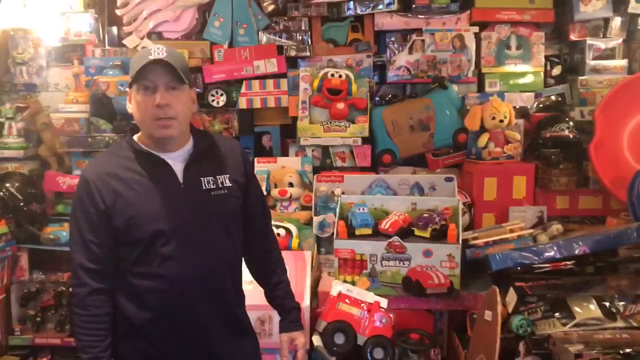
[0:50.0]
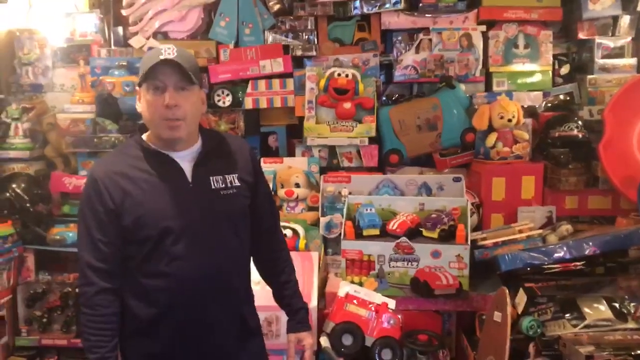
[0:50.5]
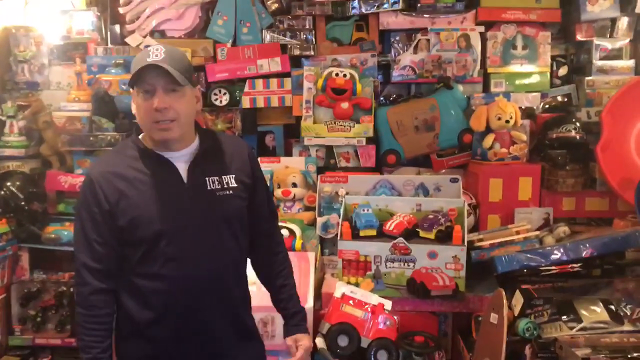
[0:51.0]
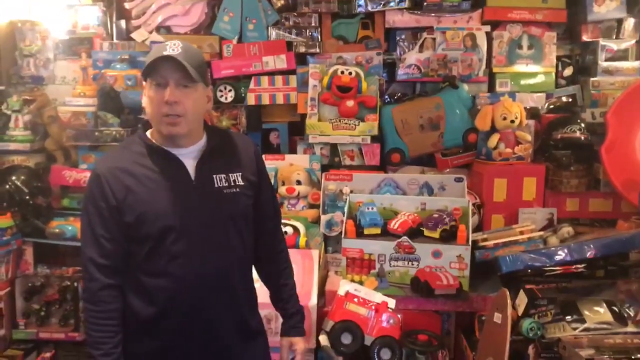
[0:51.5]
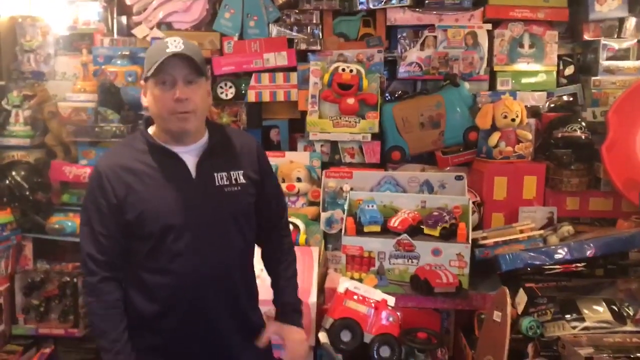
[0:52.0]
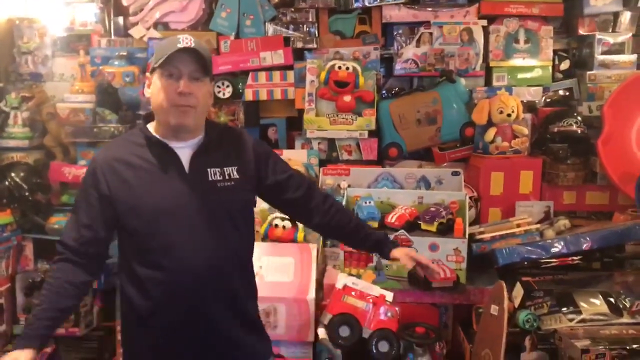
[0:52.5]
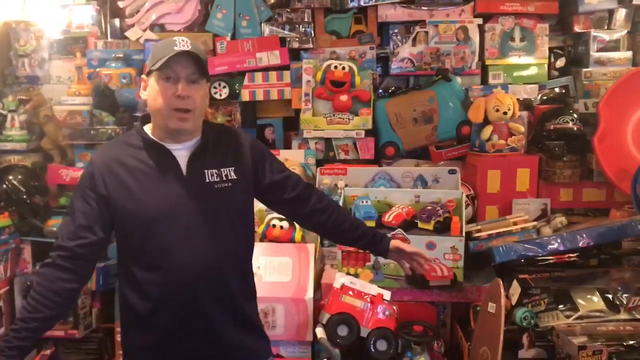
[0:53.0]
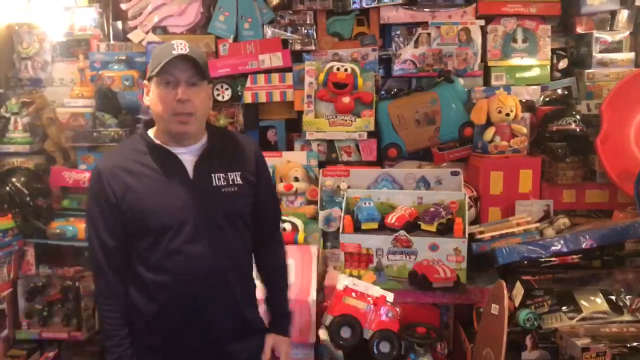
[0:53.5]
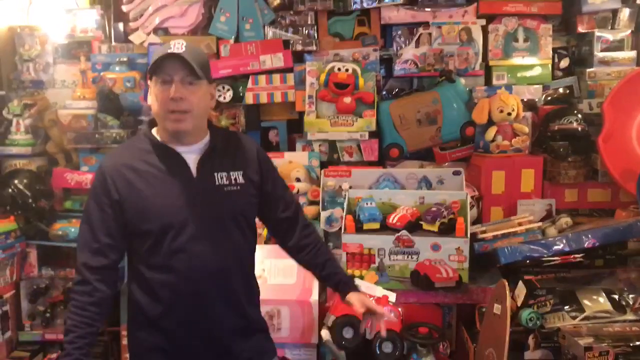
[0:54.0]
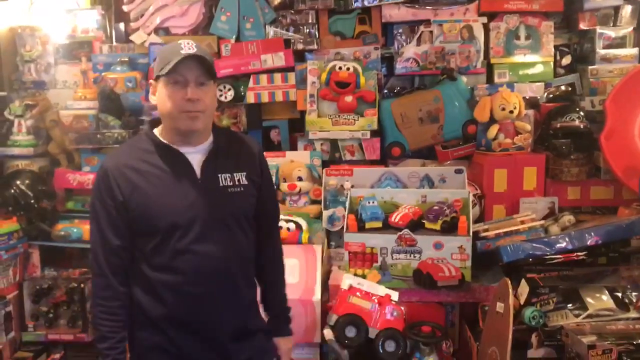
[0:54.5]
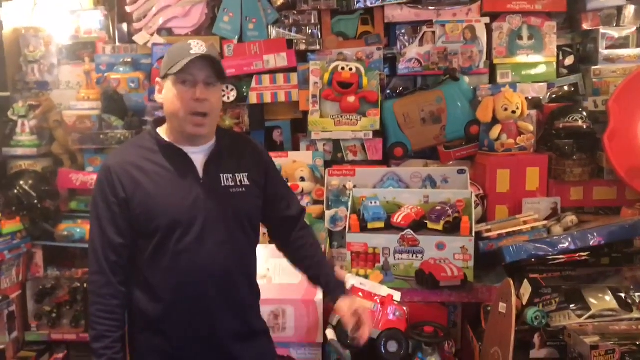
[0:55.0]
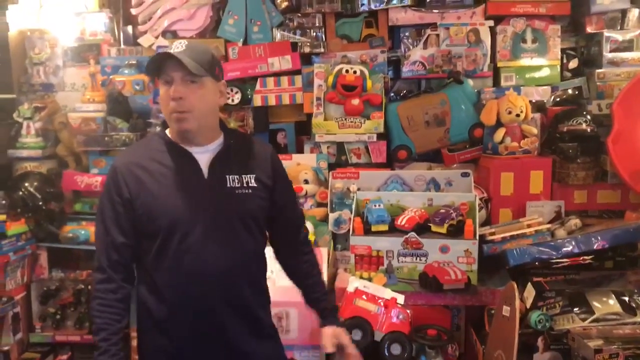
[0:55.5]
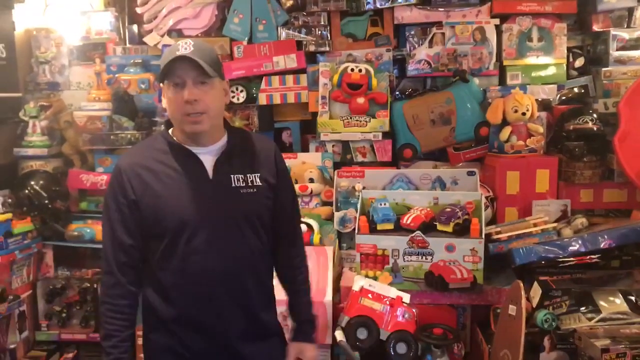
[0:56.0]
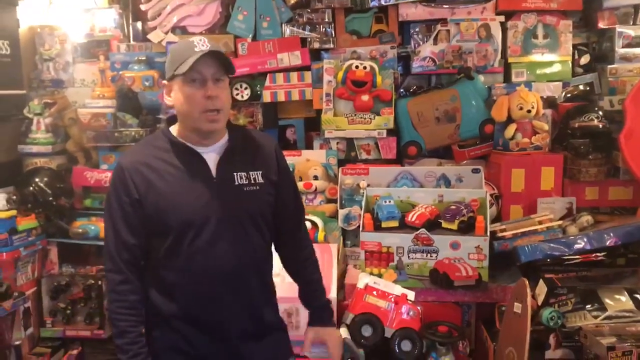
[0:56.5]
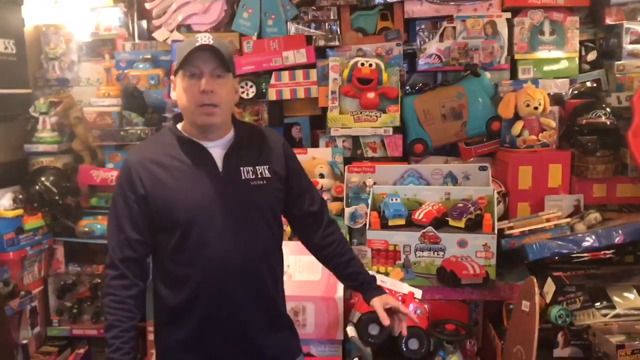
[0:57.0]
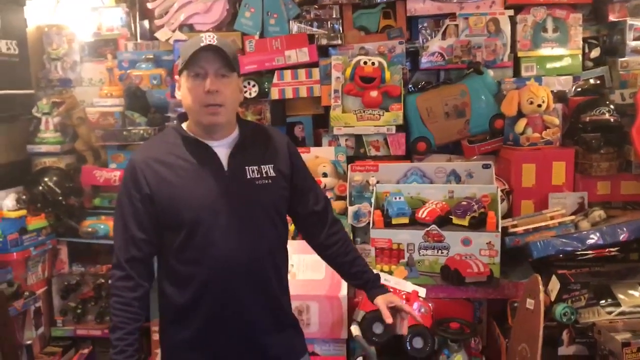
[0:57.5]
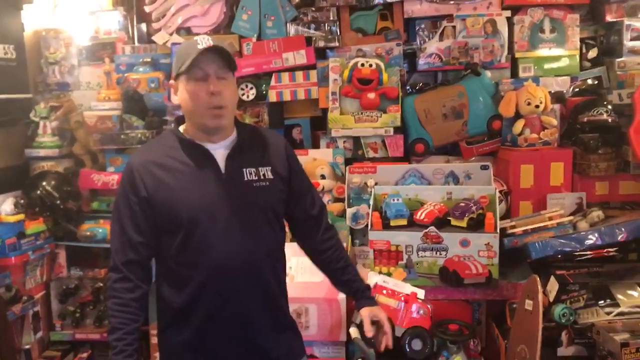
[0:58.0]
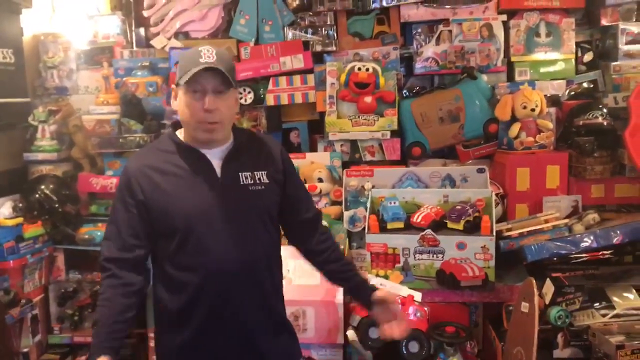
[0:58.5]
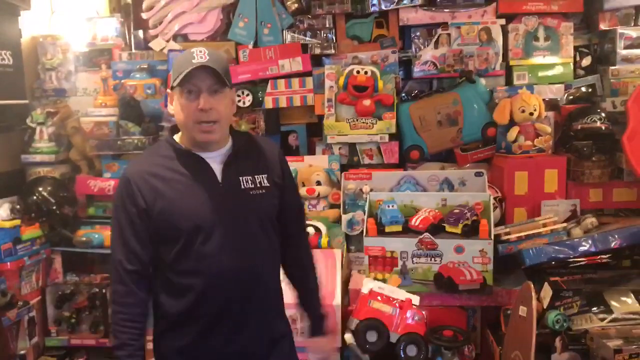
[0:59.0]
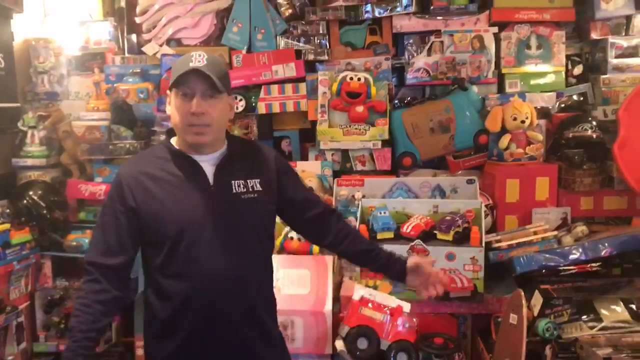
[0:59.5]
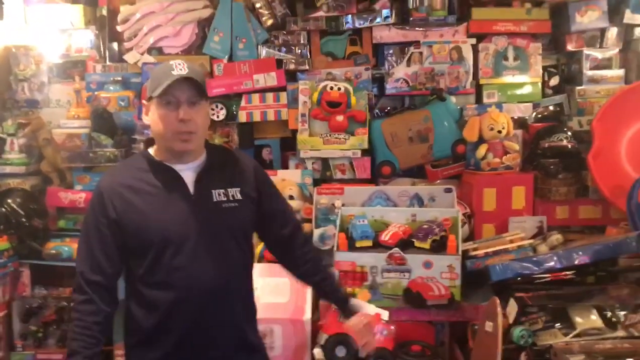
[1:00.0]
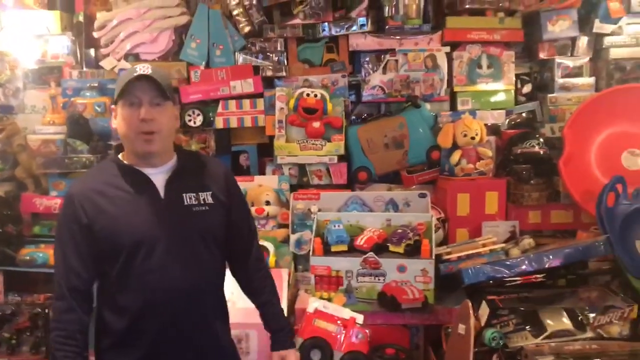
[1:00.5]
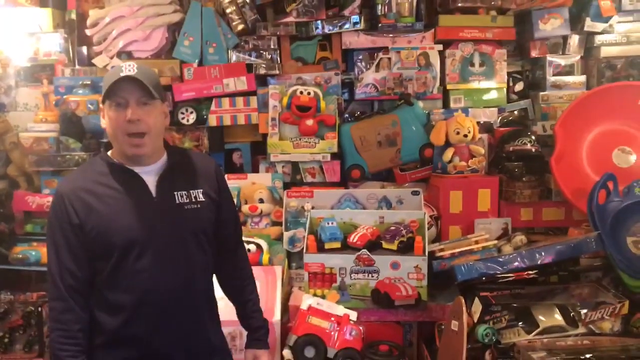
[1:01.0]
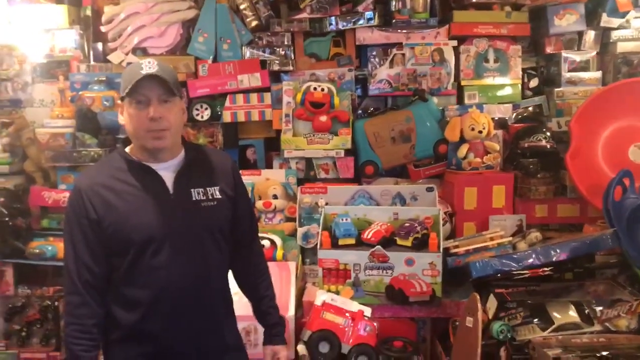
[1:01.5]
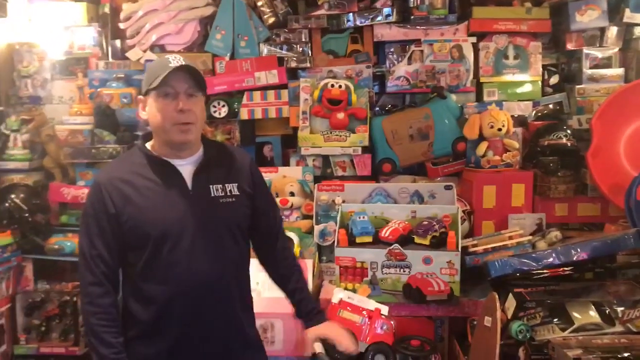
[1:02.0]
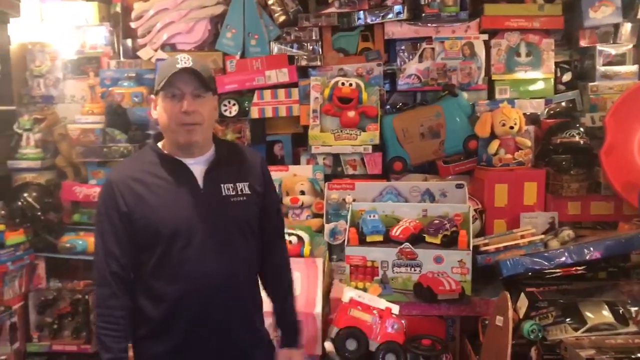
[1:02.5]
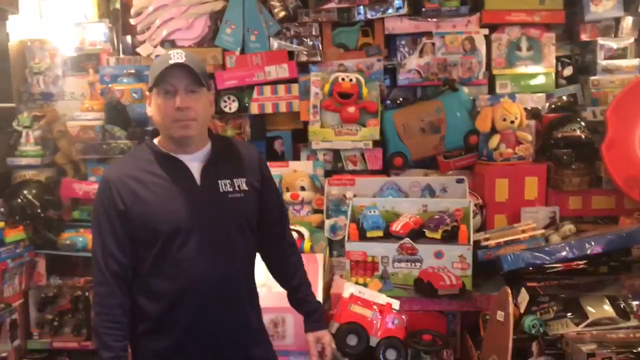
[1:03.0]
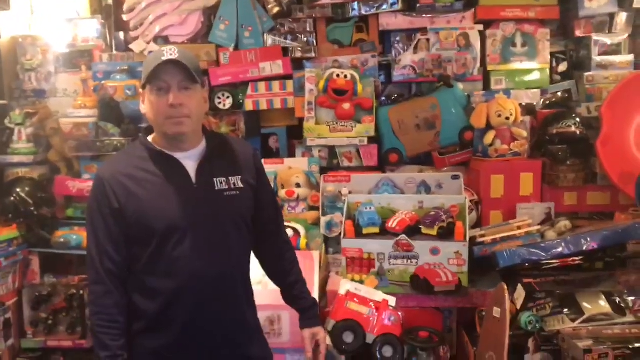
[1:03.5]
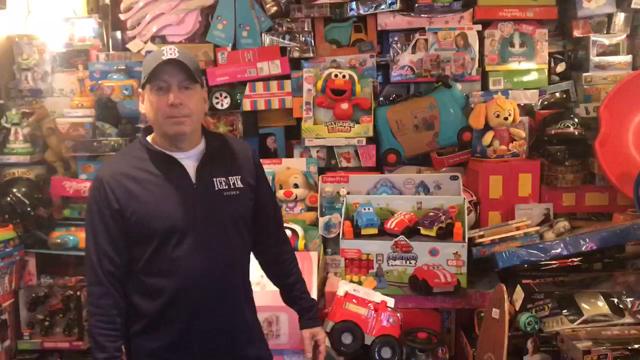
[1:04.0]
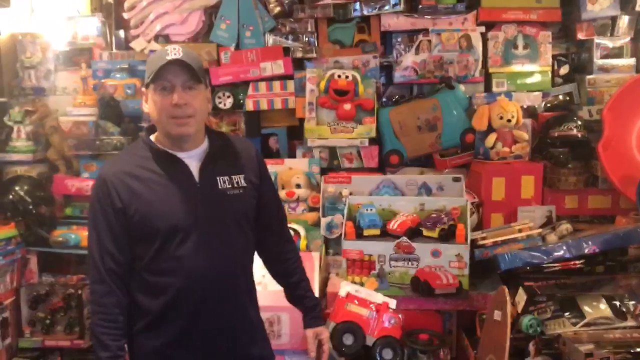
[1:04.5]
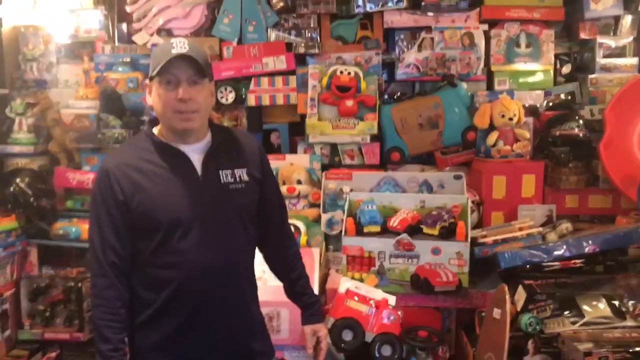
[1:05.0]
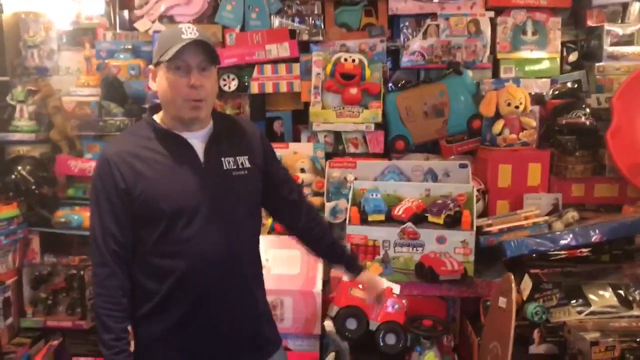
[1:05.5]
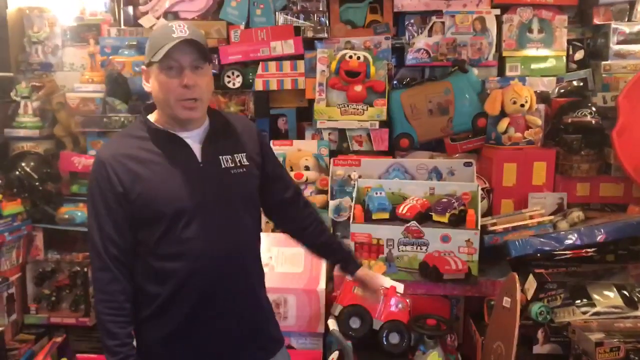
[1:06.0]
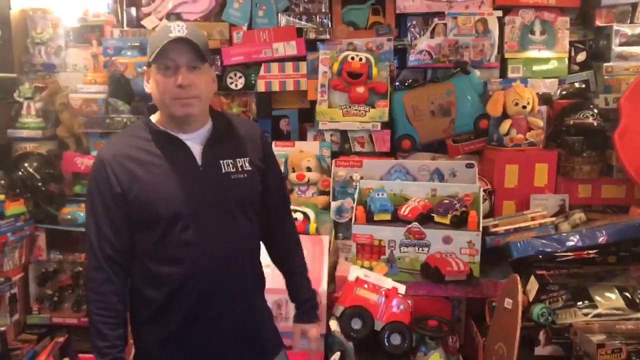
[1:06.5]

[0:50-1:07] The man keeps his right arm down the whole time as he speaks. He makes a "no no" sort of gesture with his arms out, twists his hands a little, and stands with his arms out to the side and down by his pants, doing this a few times. At the bottom right there looks like a Supercharger toy car of a pretty good size, with red wheels, black in the middle and a window. Its front and driver's side are visible, and there is apparently a bright light on both sides.